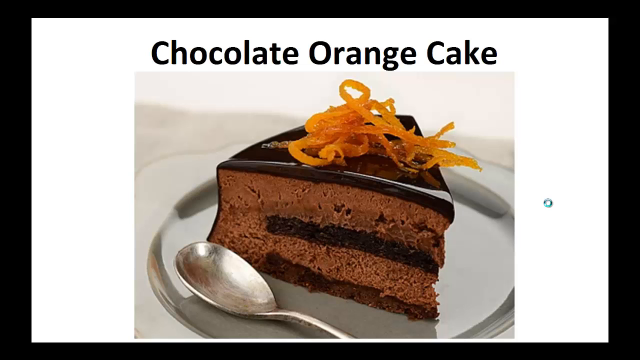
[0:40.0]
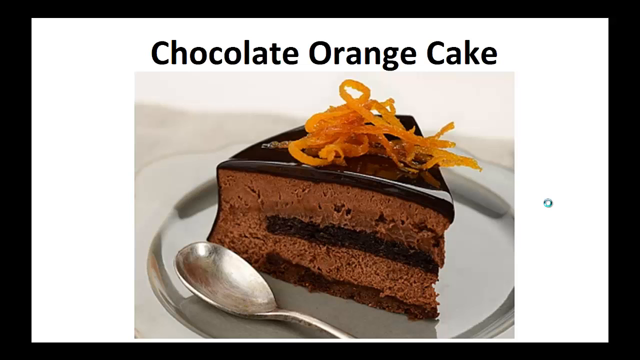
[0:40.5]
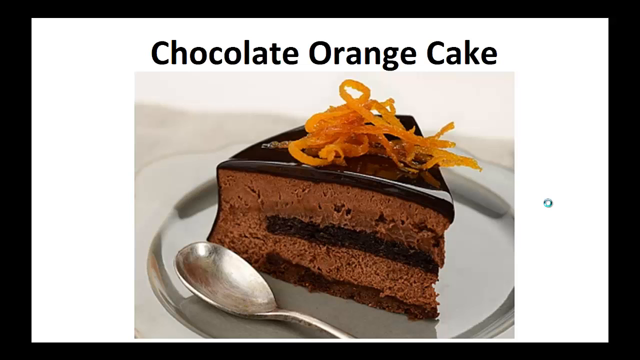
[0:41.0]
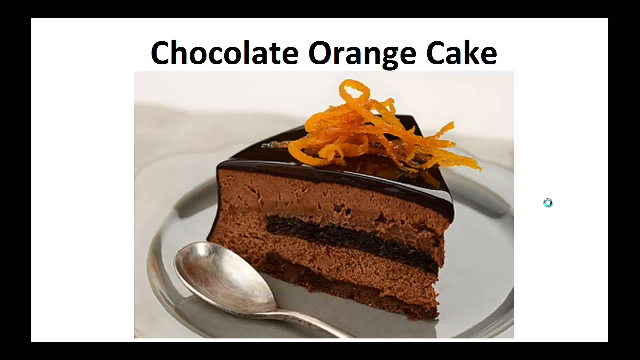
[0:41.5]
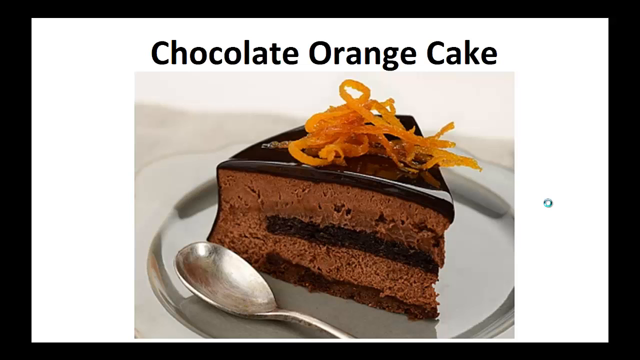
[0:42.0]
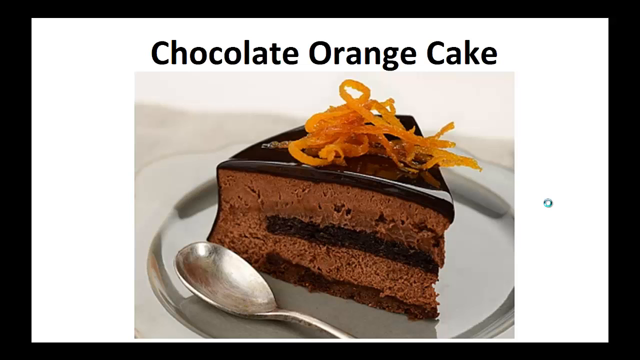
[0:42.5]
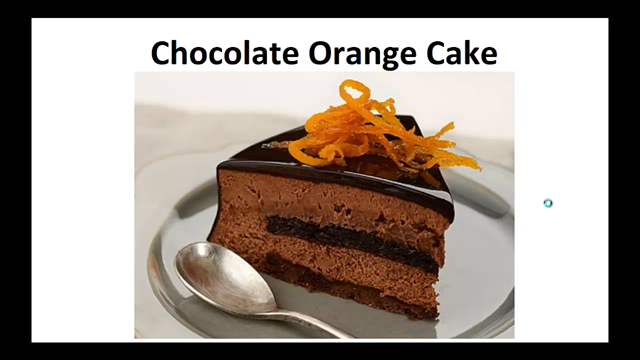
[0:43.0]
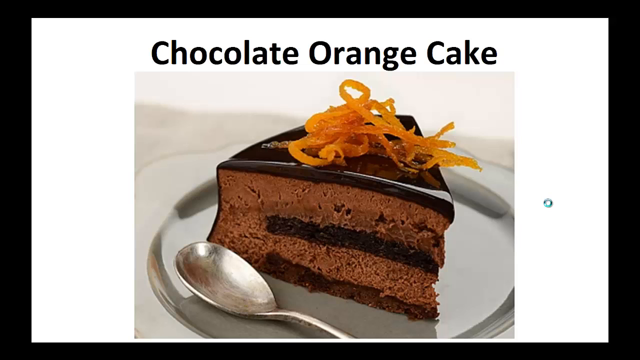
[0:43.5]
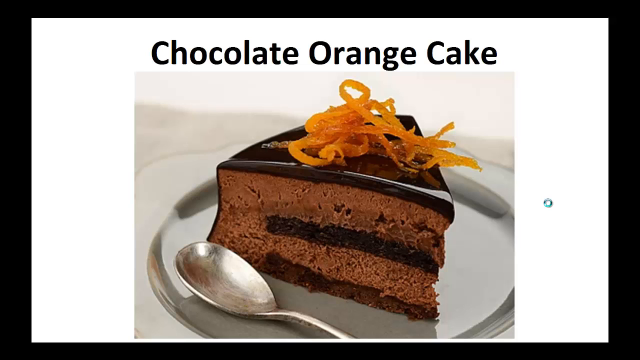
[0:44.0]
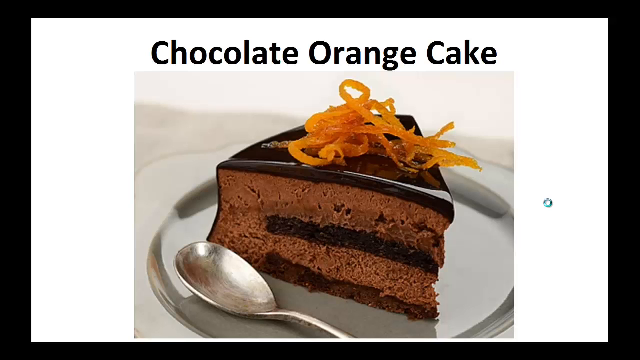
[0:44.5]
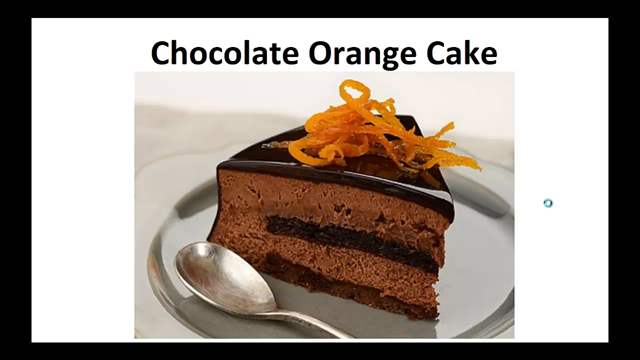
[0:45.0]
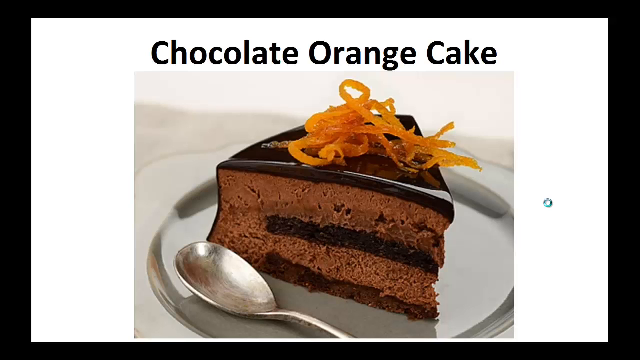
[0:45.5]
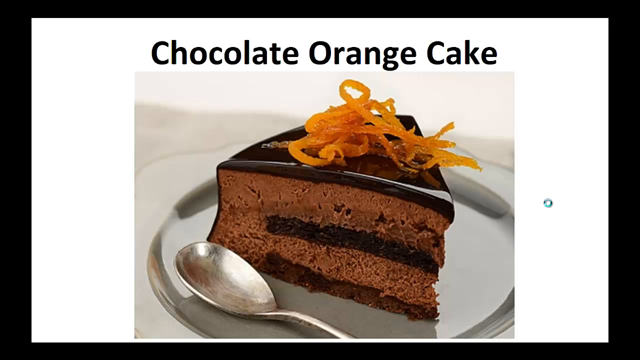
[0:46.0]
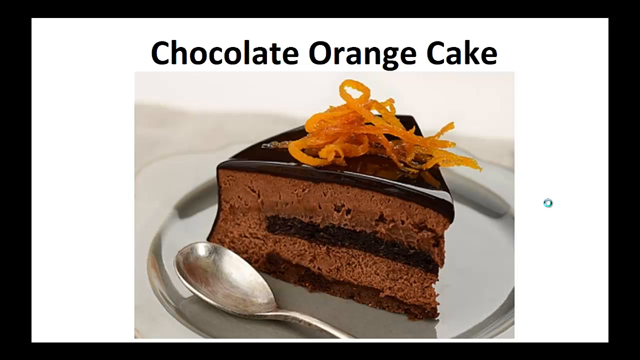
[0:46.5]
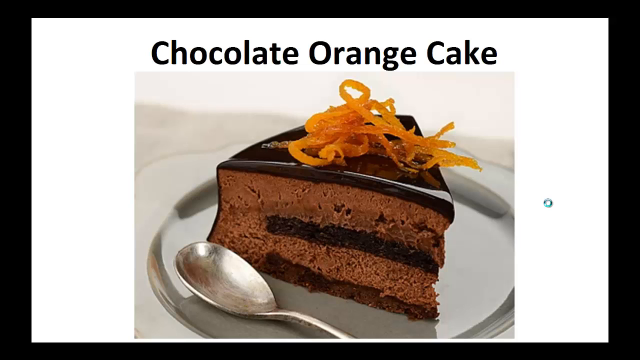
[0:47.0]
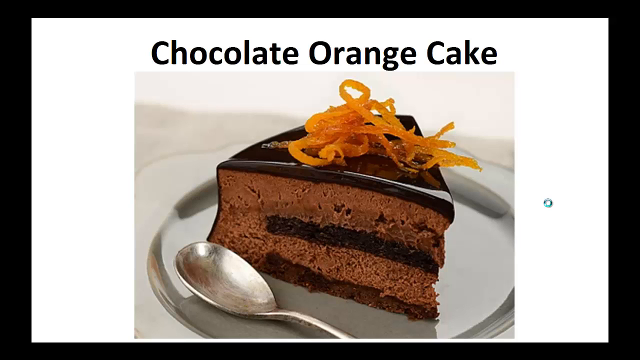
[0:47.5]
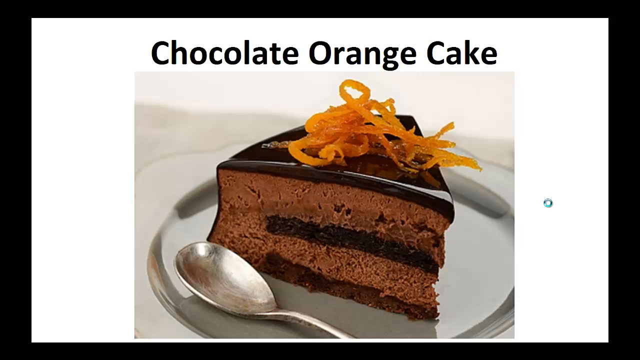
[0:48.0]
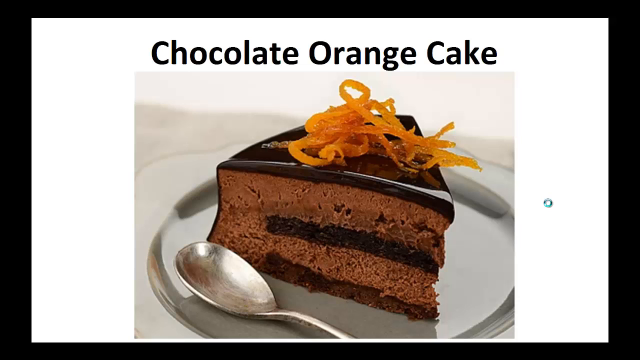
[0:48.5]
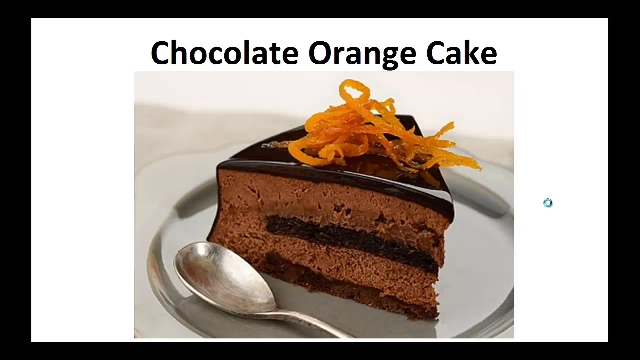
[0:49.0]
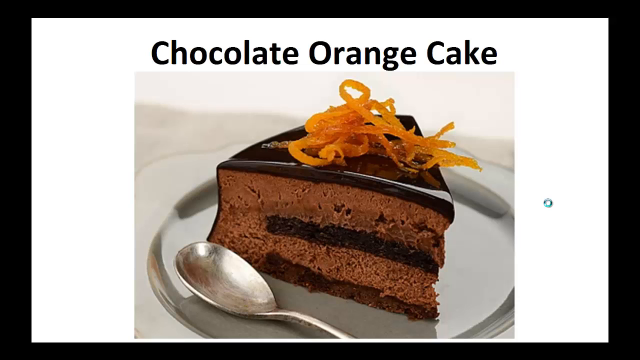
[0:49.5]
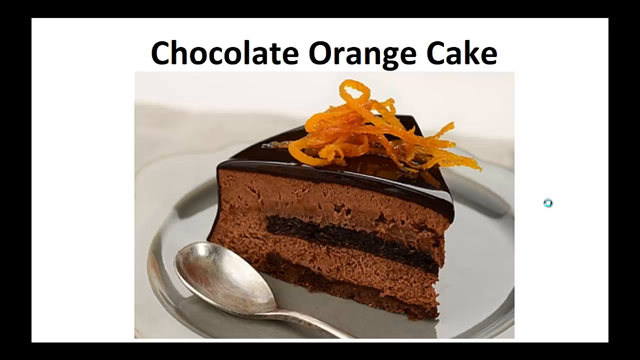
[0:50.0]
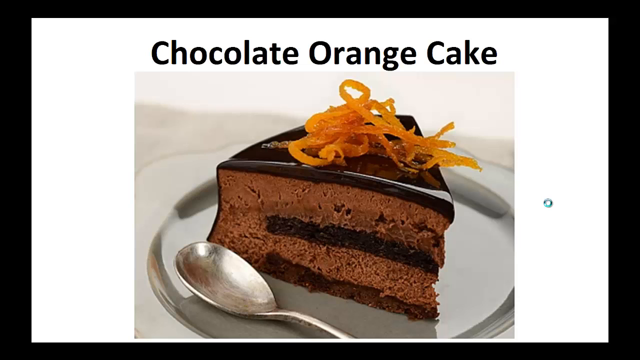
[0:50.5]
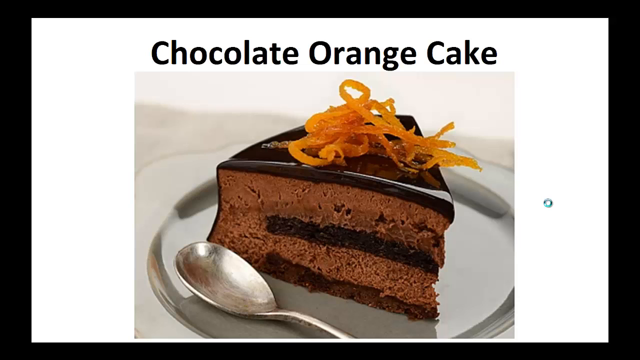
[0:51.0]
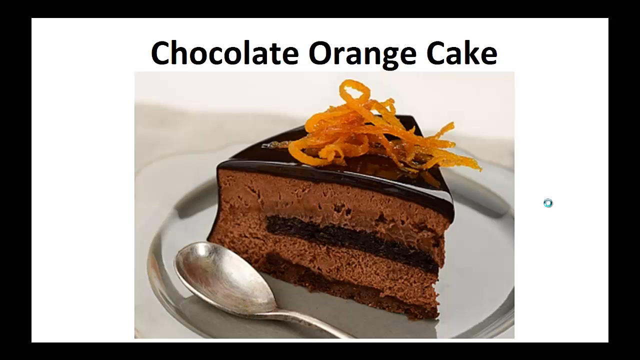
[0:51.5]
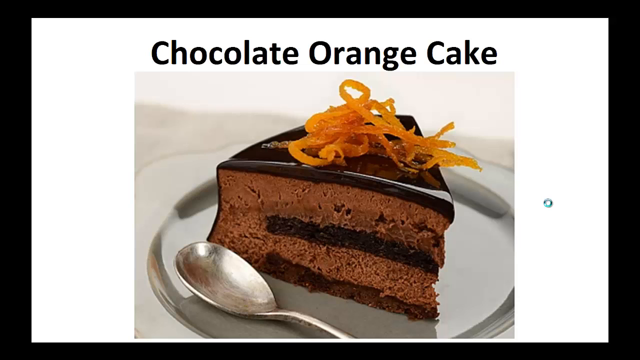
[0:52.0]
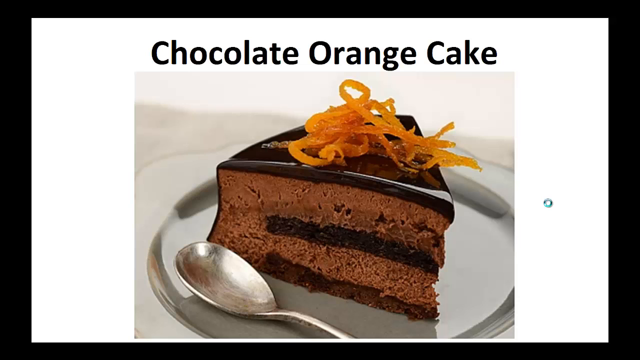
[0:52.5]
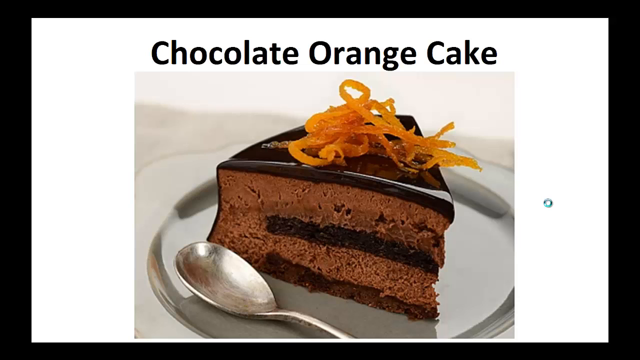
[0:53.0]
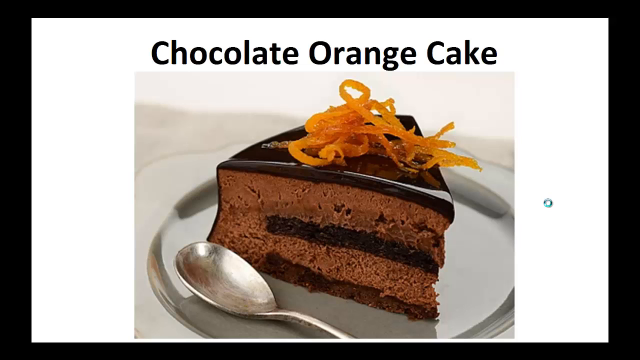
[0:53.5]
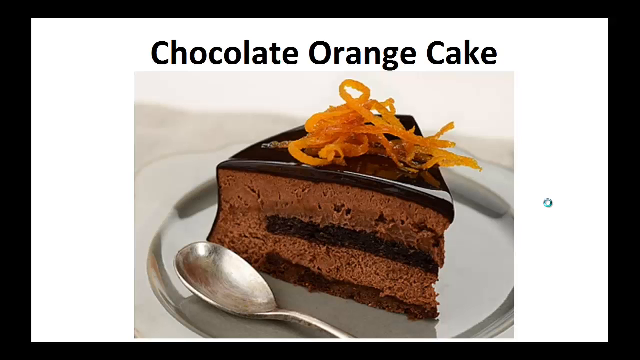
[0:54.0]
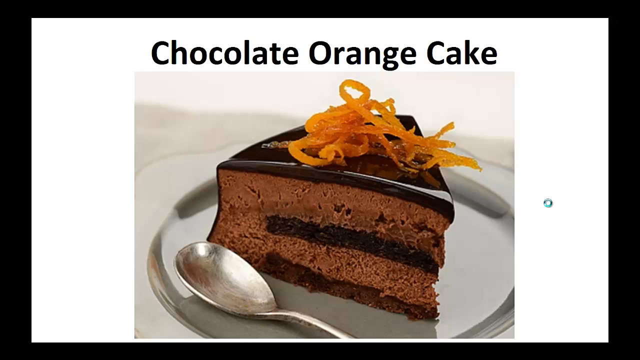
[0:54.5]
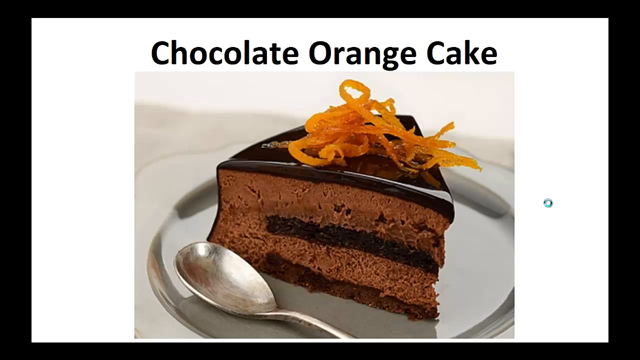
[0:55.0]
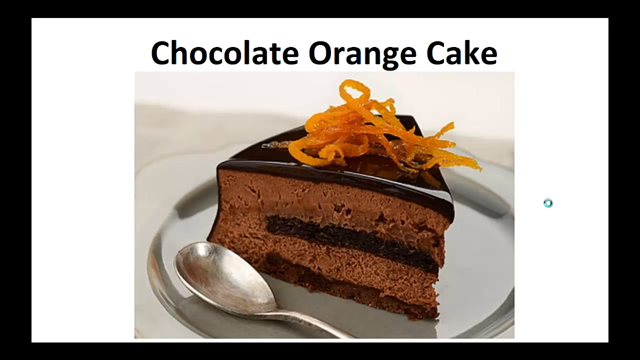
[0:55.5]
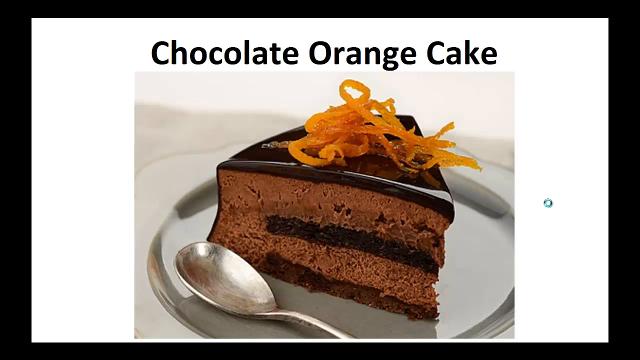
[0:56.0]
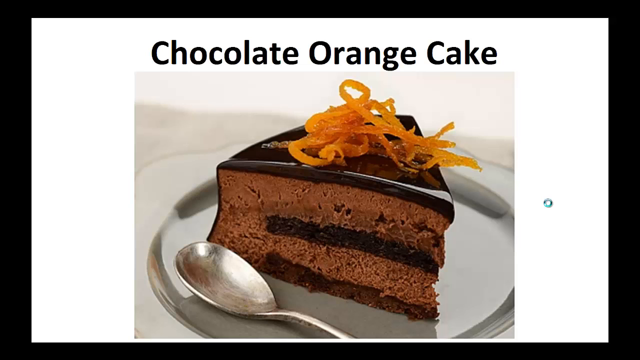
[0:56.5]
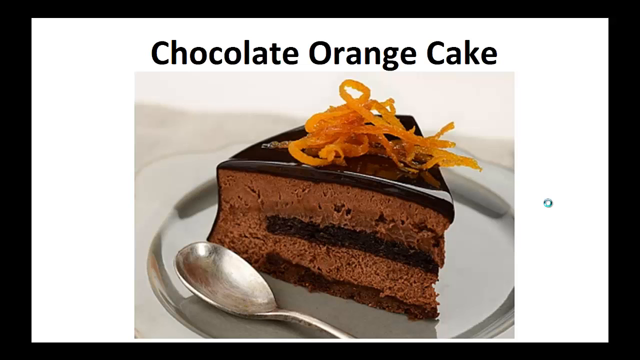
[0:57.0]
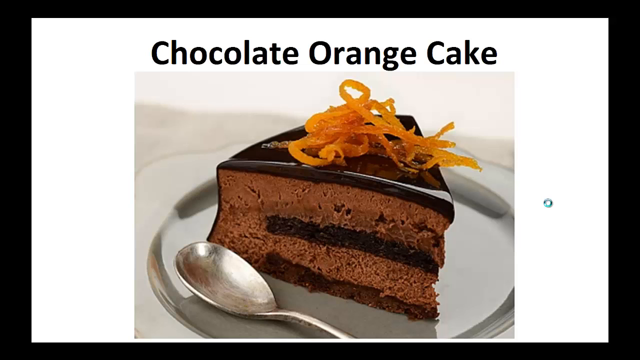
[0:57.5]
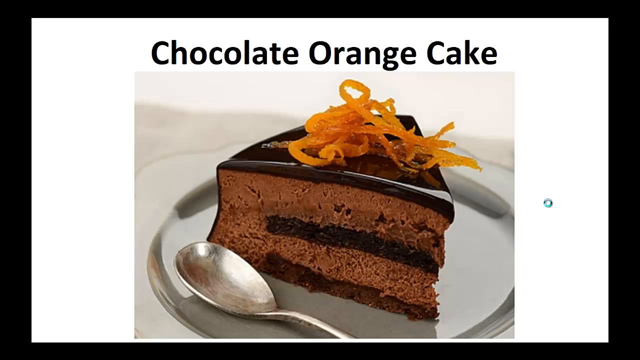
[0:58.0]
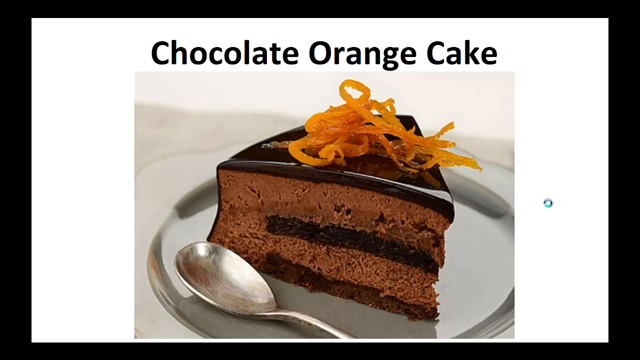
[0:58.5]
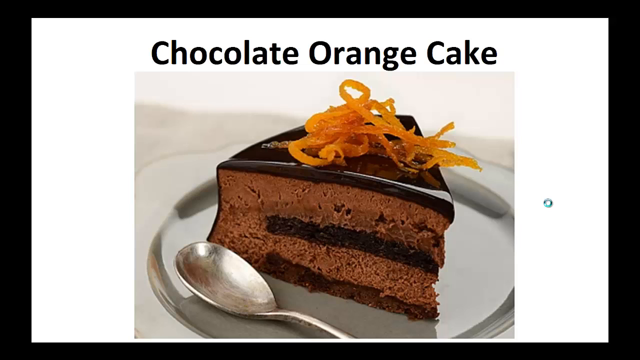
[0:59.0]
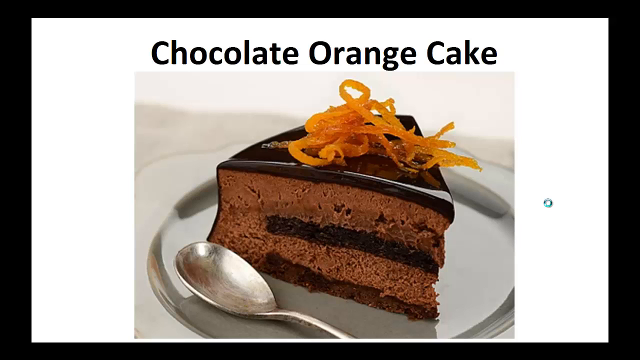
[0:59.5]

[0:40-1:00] On a level with the oozing icing, on the white border on the right-hand side of the frame that contains the cake, there is a single small, stray circle that appears to have no place in the photo. The border is bare apart from this circle, which is slightly to the left within the border, and the border covers perhaps a fifth of the width of the page. The same white border is on the other side. Outside the white border, a black border runs up the left-hand side, along the top, down the right-hand side and along the bottom of the frame, so the image has a white border followed by a black border on the outside.